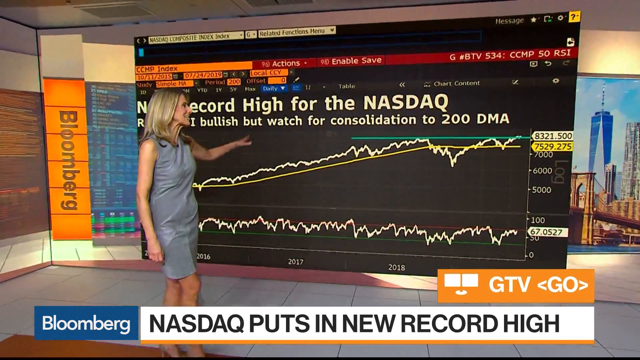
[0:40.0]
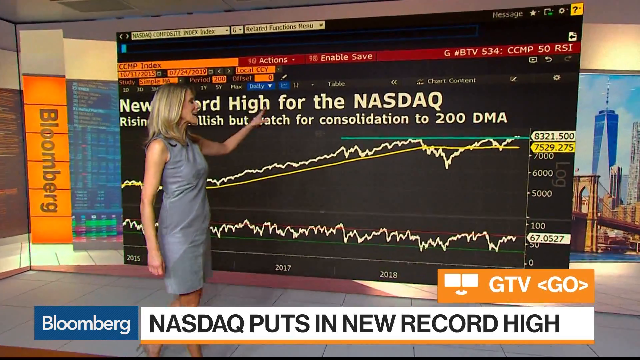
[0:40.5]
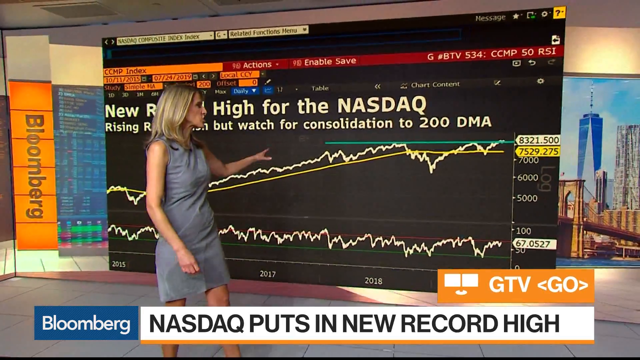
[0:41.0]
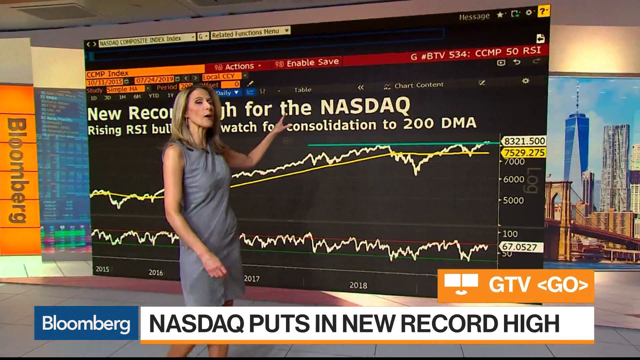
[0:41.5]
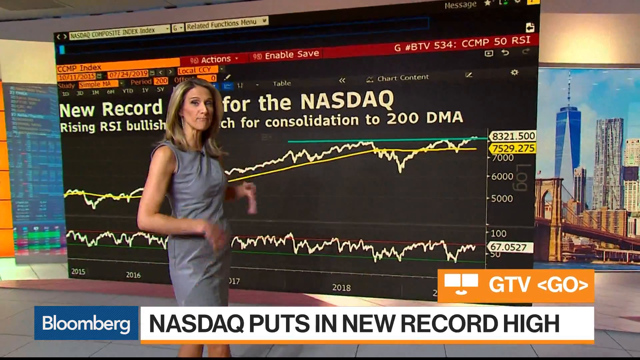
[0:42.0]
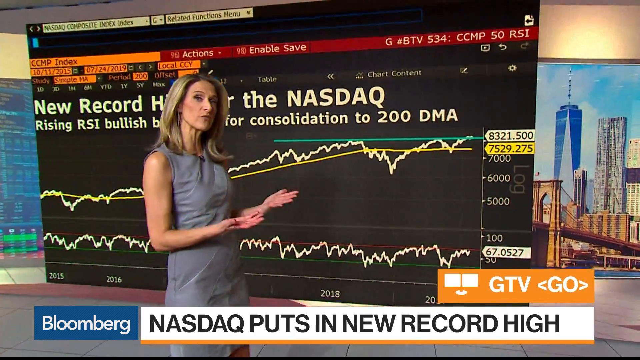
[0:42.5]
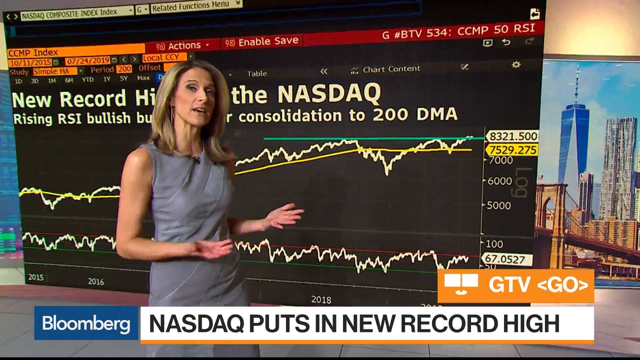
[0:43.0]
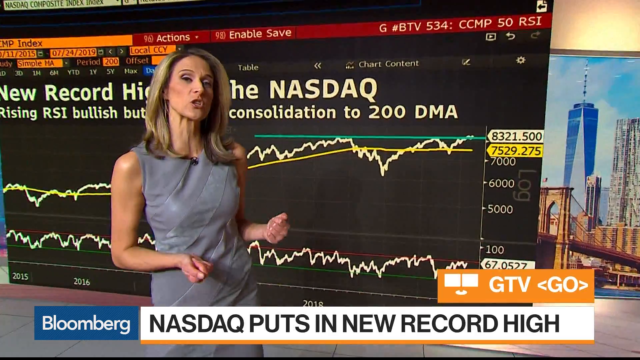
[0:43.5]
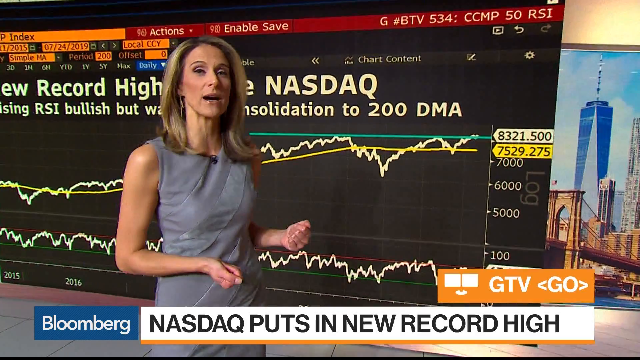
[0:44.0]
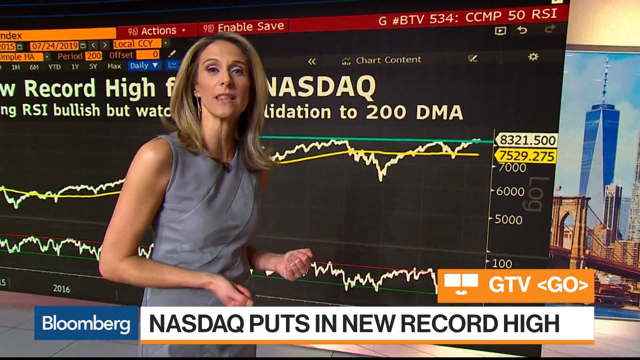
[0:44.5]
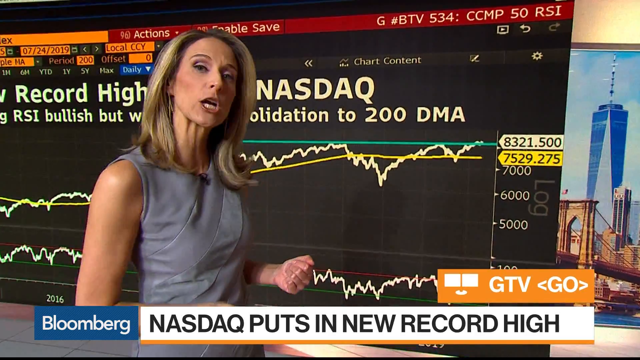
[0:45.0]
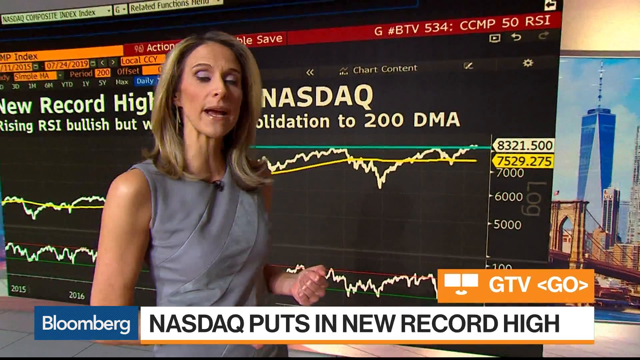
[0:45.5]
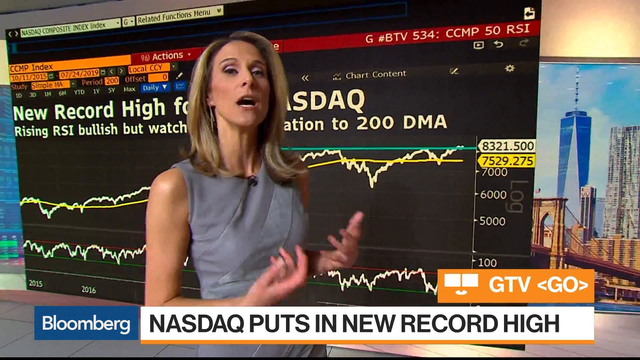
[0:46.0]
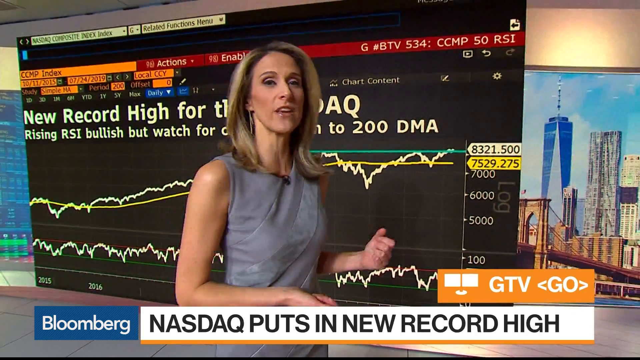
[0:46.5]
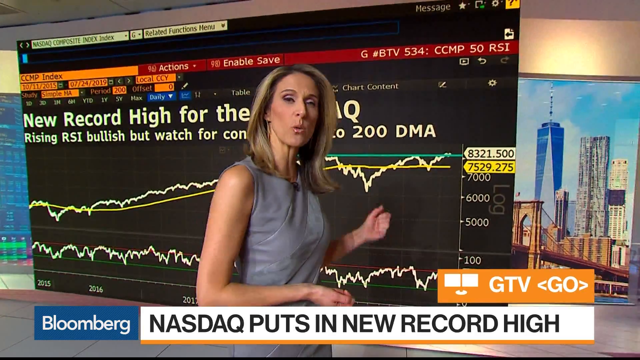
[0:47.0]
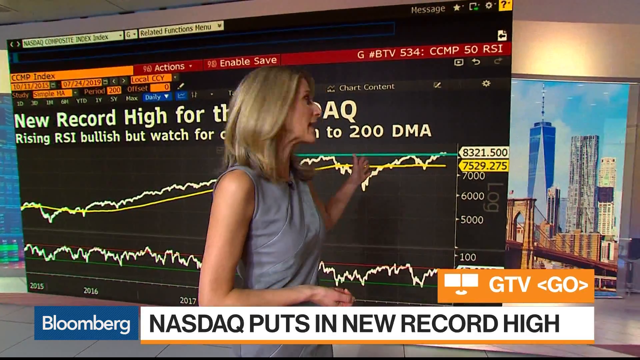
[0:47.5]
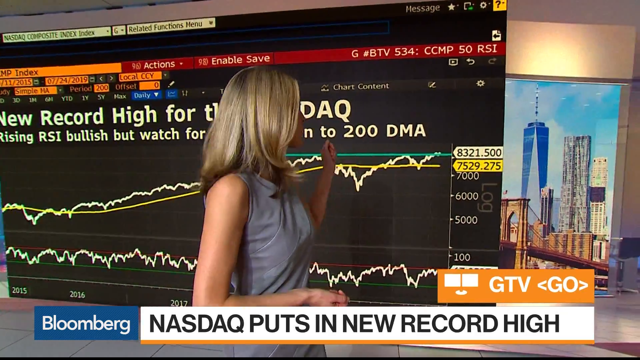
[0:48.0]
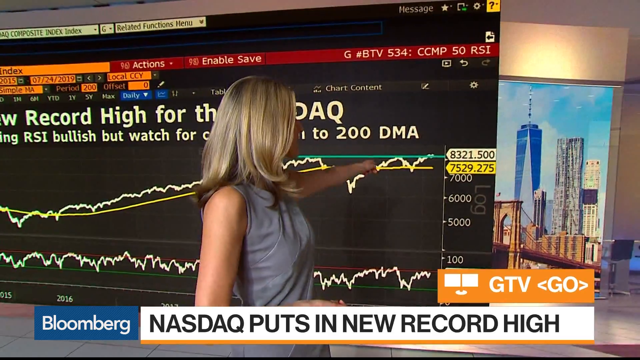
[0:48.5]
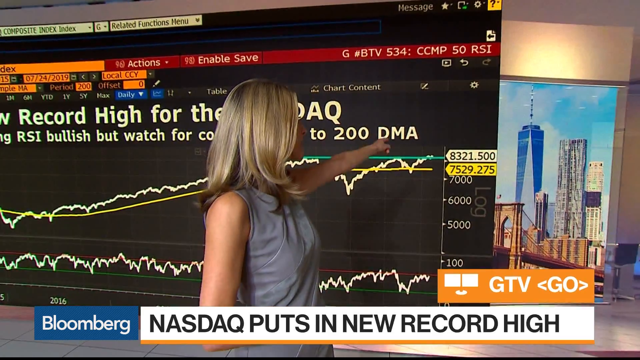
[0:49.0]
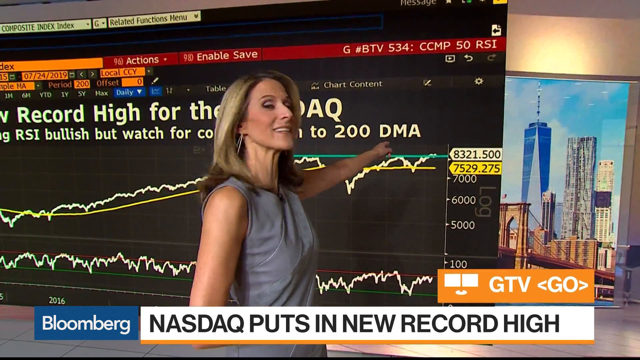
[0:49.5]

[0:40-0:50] The anchor is standing in front of the chart, using her hands to point out detailed information about the numbers on it. The yellow line trends upwards and ends at 7529.275, and the white line above it ends at 8321.500. The camera pans in a bit towards her so the frame is tight on her, from the shoulder area up. Then it zooms back out, and she takes a few steps back towards the left side of the screen, again pointing out information. The screen shows the record high for the NASDAQ.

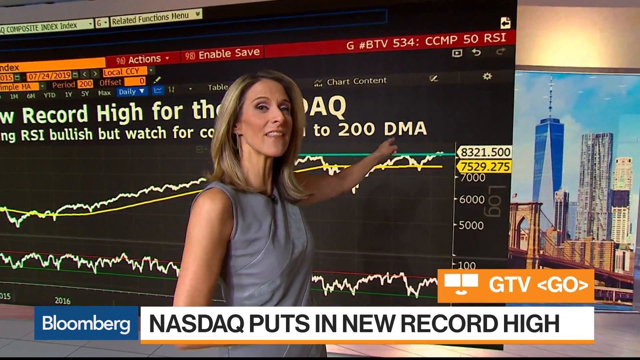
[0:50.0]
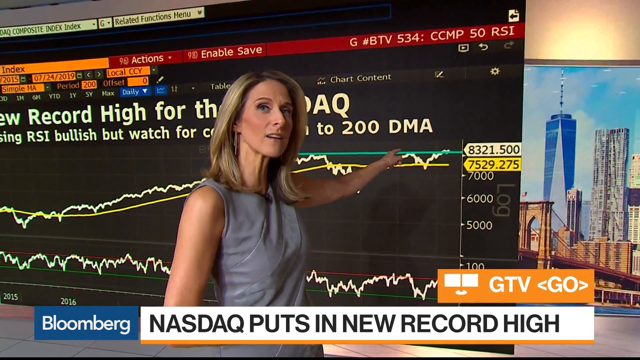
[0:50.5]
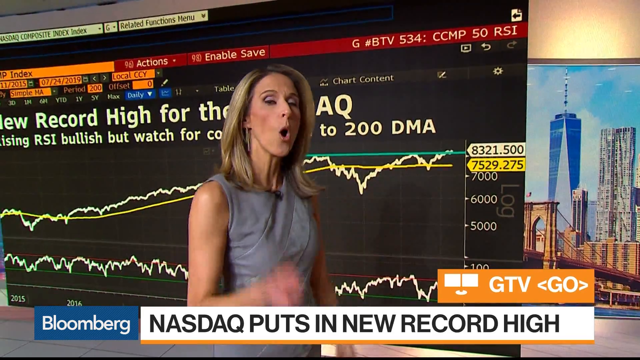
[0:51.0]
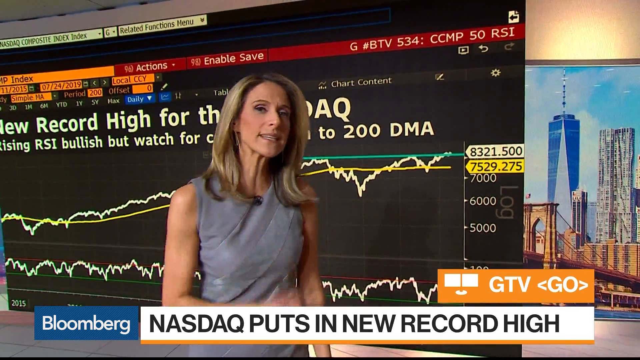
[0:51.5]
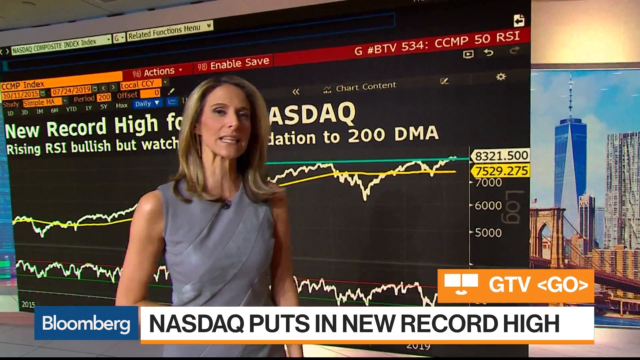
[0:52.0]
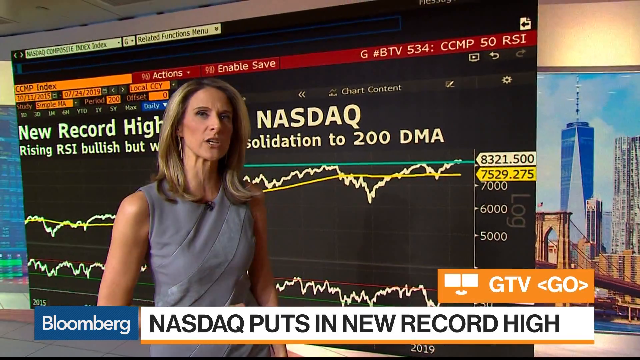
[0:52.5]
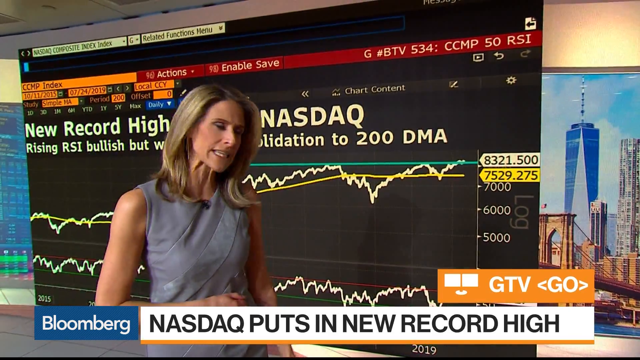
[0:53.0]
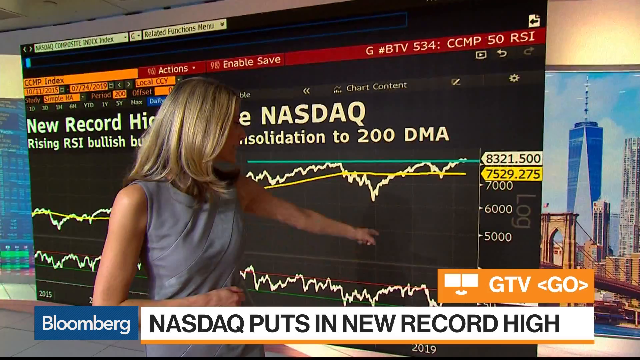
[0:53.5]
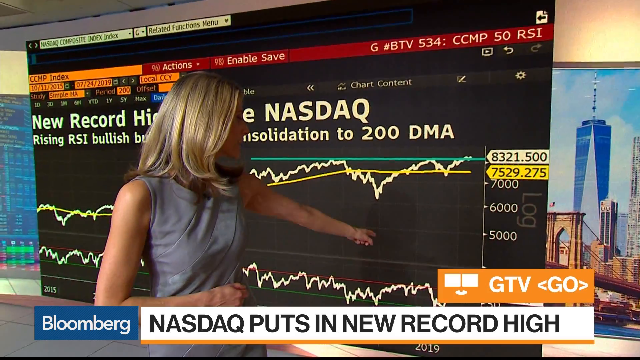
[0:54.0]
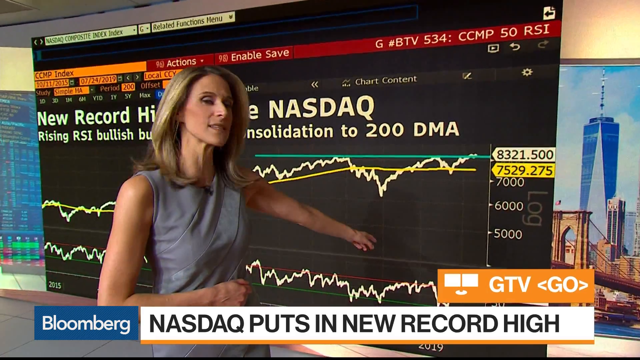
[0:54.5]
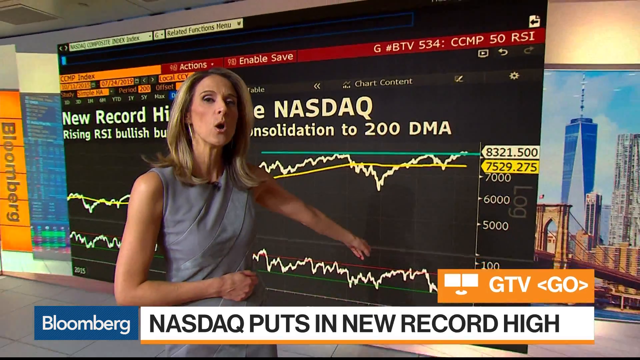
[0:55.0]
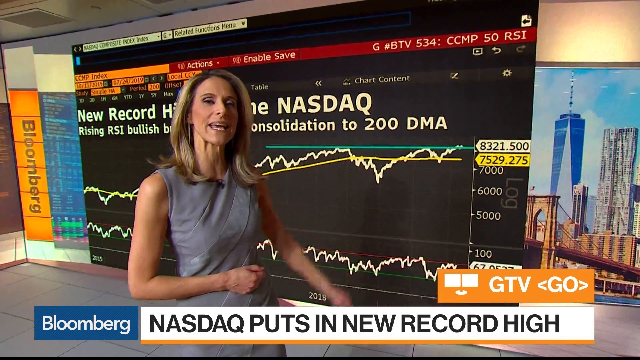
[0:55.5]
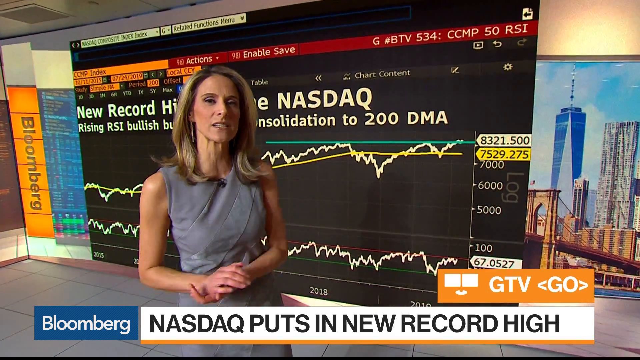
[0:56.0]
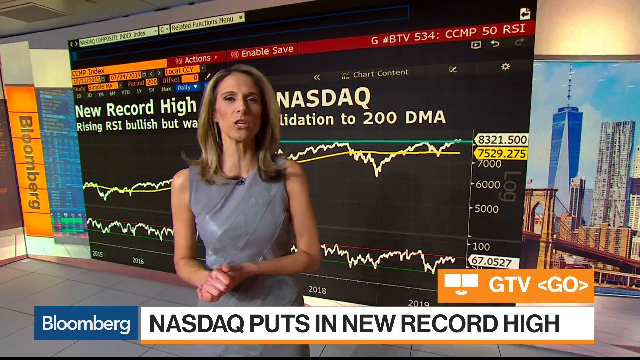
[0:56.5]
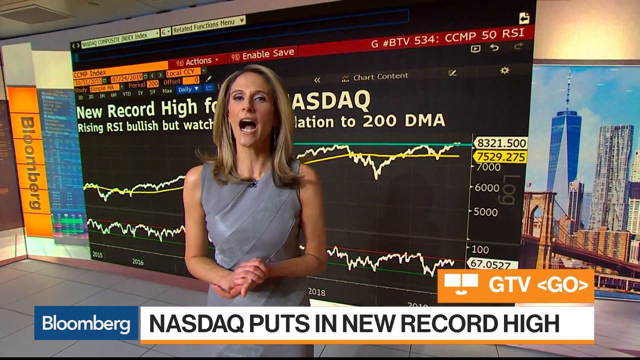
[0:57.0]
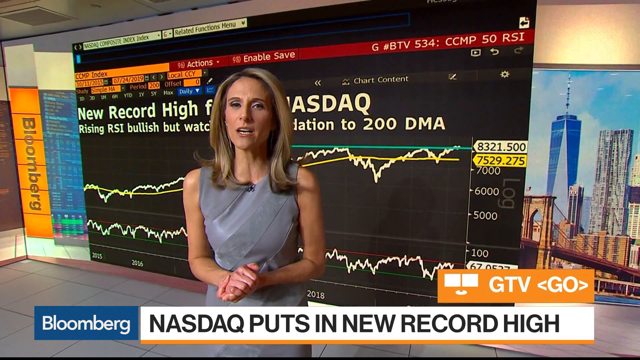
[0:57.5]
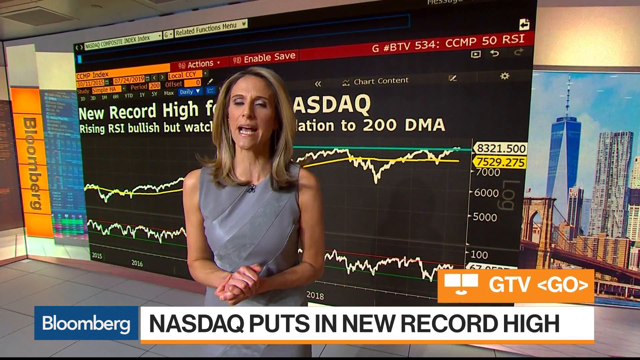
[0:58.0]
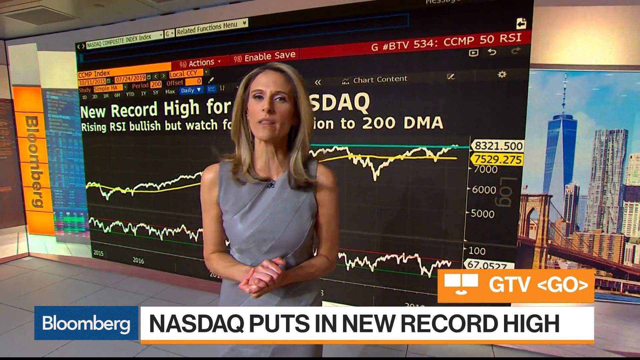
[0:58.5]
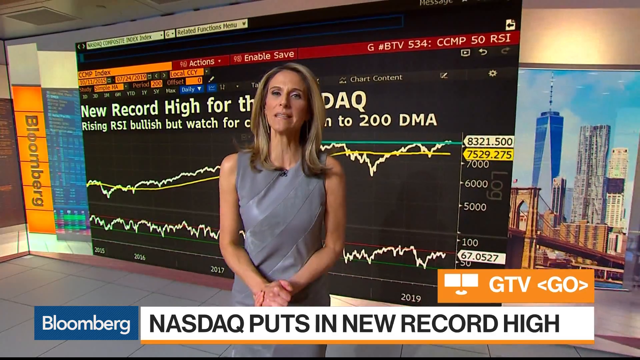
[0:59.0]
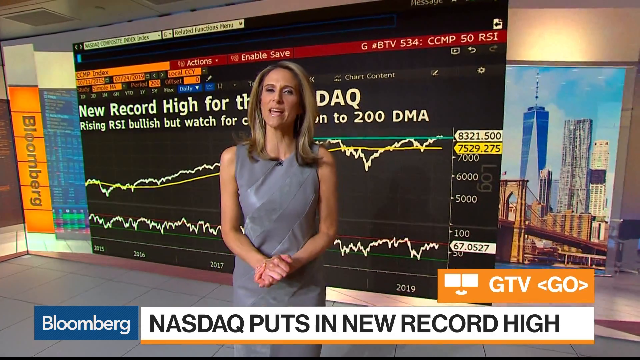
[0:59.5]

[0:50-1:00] The anchor, still in her gray silver dress, stands in front of the NASDAQ new record high graph, using her hands to point at information on it, and she still appears happy. She is closer in the frame now, so nothing below her hips is visible. In the bottom left corner of the screen is a blue Bloomberg box, and beside it a white infographic says "NASDAQ puts in new record high." Above that, on the bottom right of the screen, is an orange rectangle with two white squares inside it and white font that says "GTV GO," with little brackets around the word "GO"; both "GTV" and "GO" are in all caps.